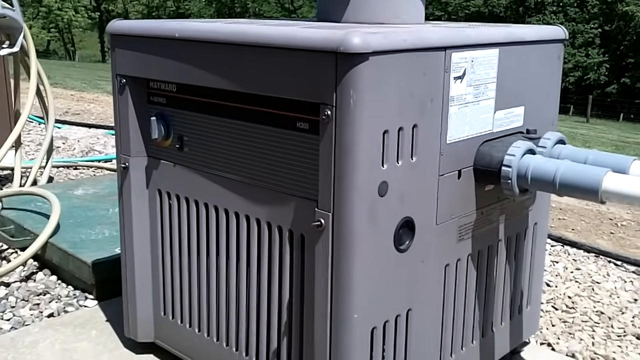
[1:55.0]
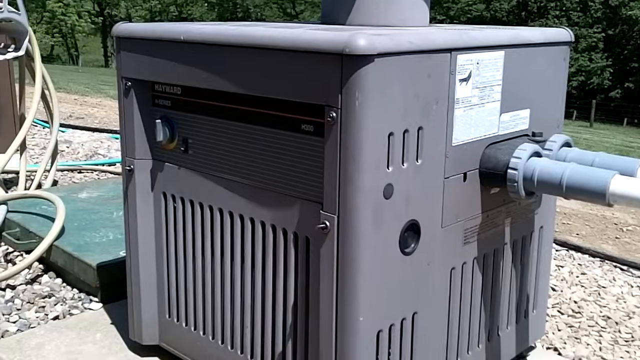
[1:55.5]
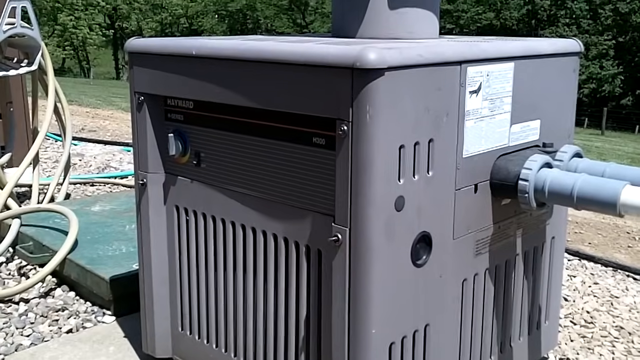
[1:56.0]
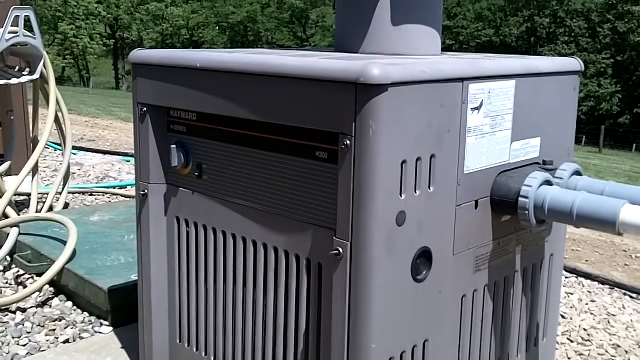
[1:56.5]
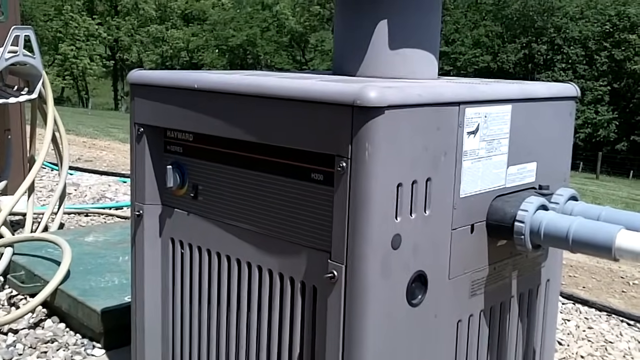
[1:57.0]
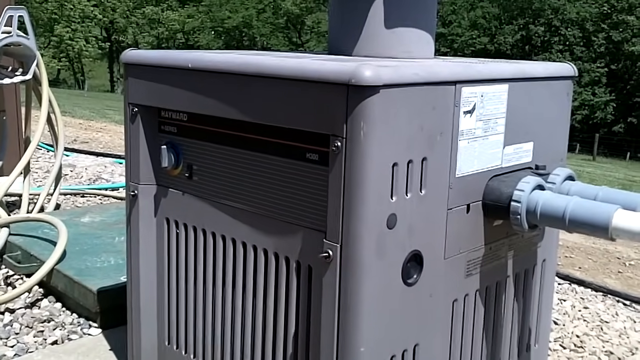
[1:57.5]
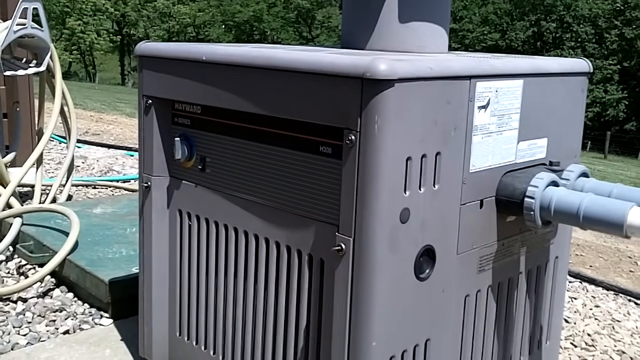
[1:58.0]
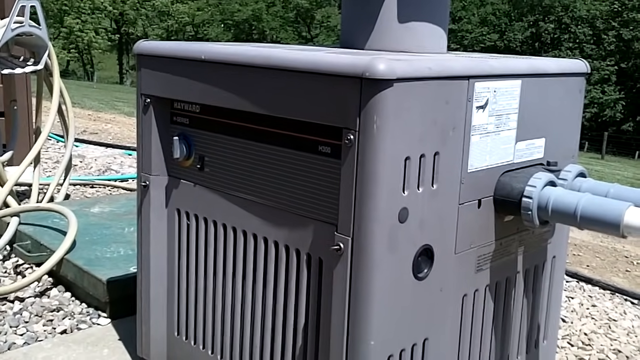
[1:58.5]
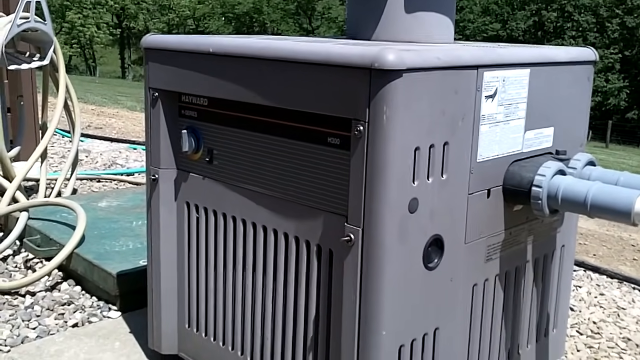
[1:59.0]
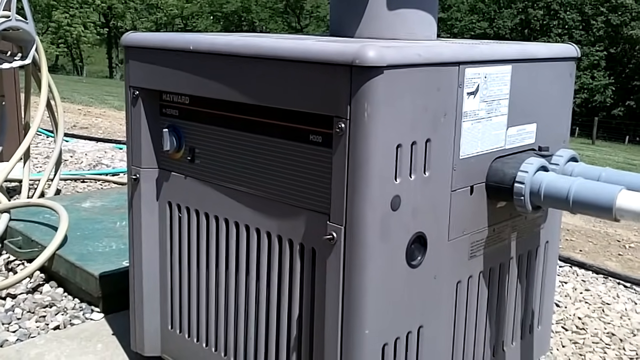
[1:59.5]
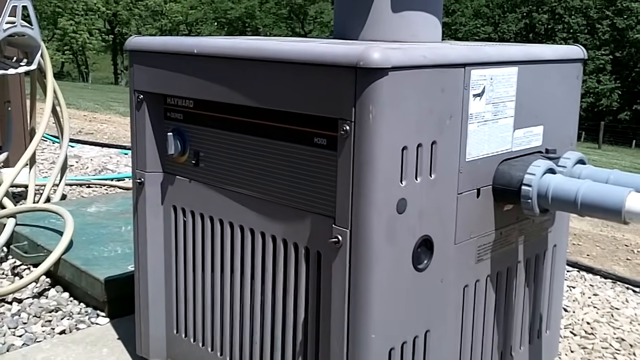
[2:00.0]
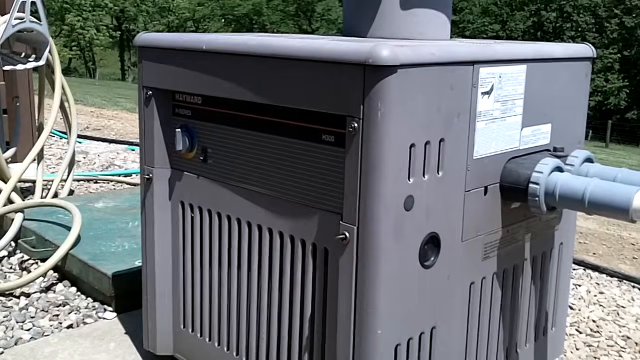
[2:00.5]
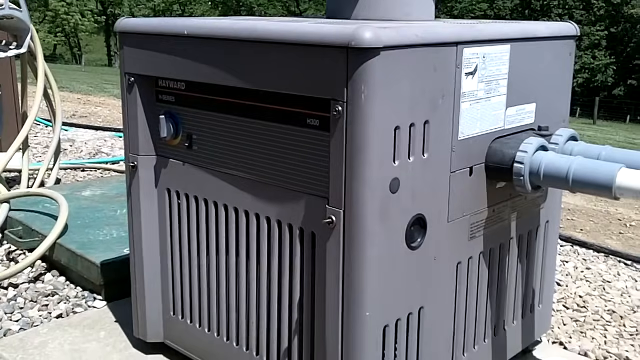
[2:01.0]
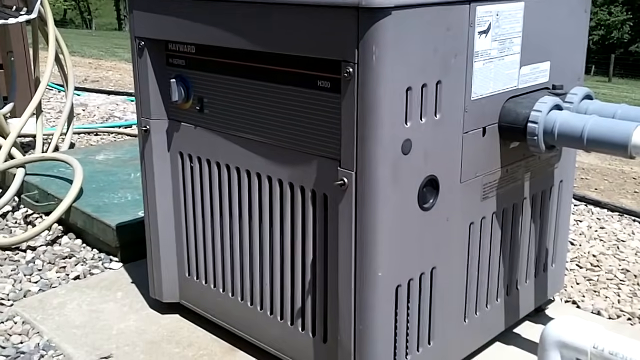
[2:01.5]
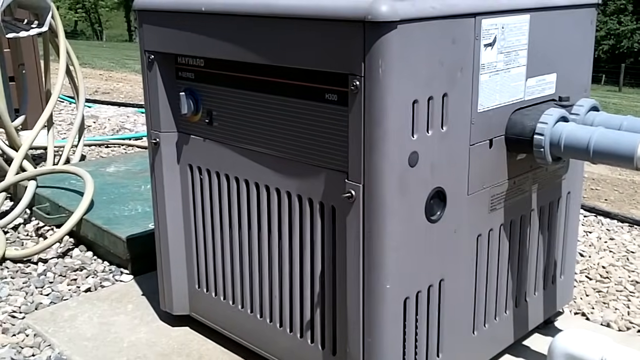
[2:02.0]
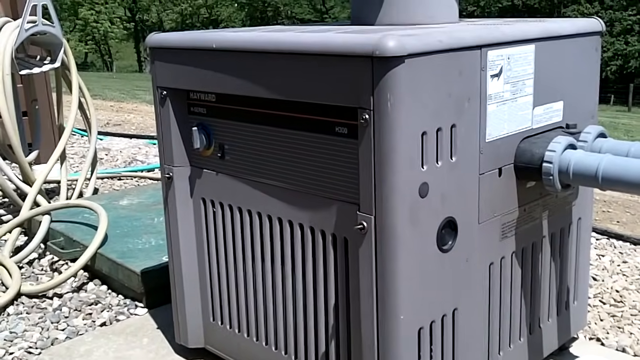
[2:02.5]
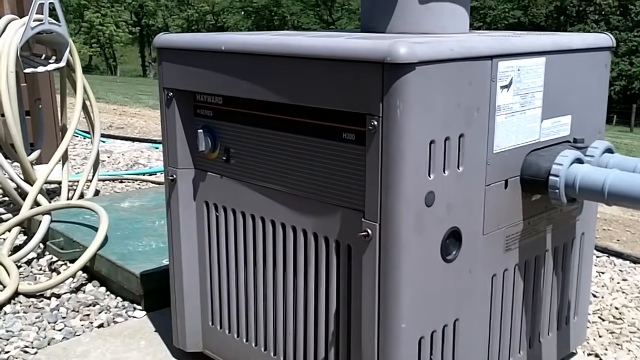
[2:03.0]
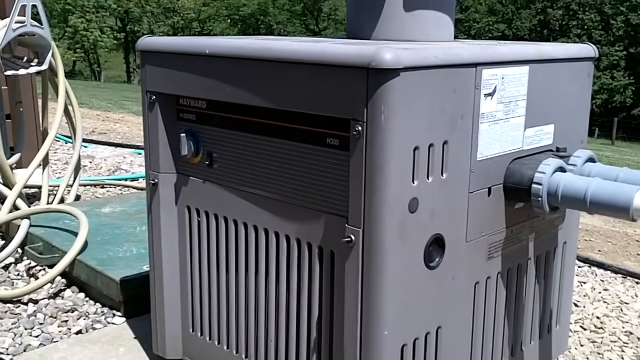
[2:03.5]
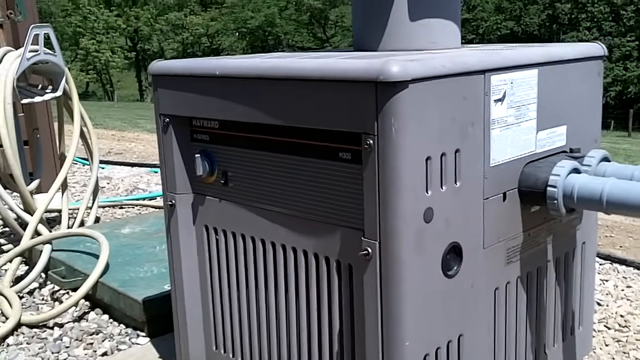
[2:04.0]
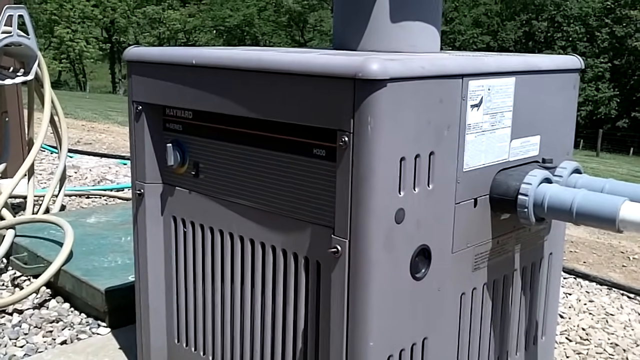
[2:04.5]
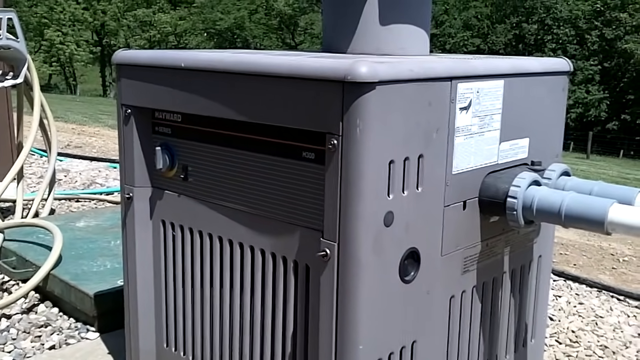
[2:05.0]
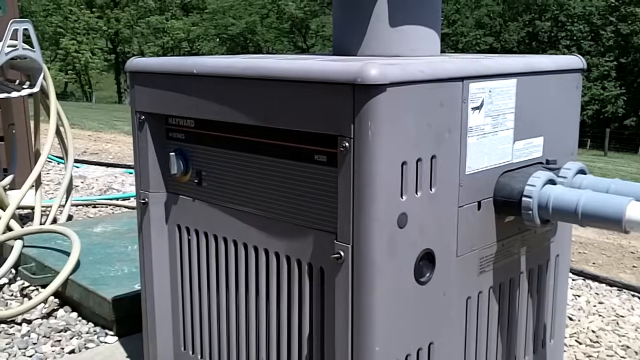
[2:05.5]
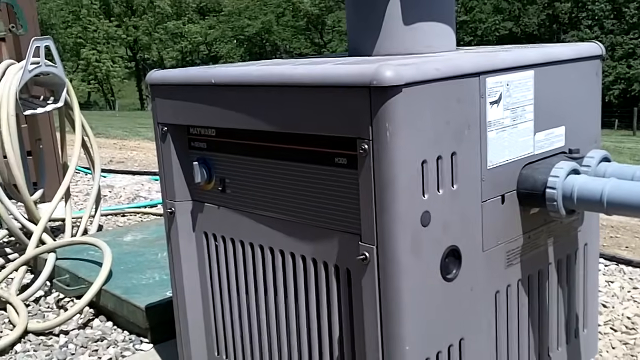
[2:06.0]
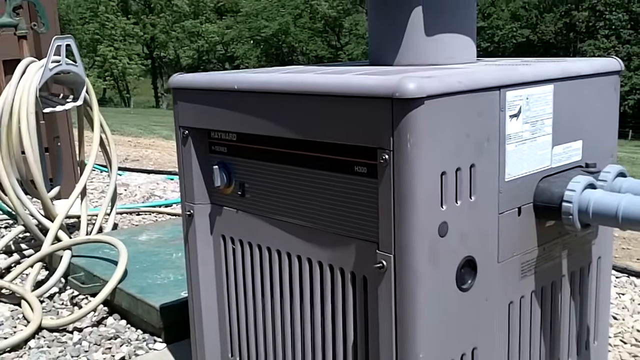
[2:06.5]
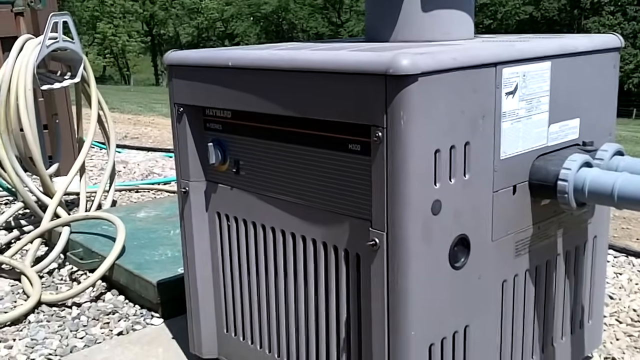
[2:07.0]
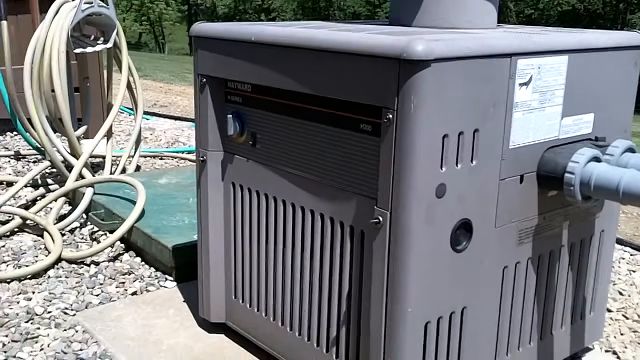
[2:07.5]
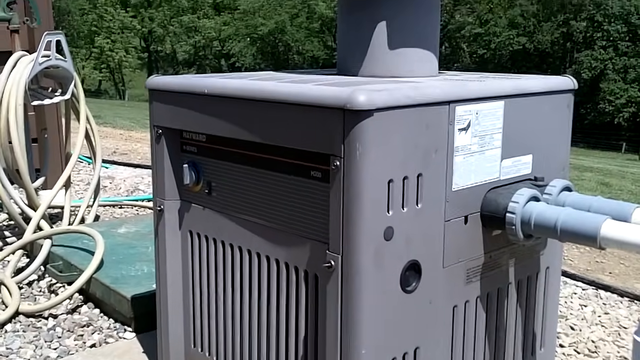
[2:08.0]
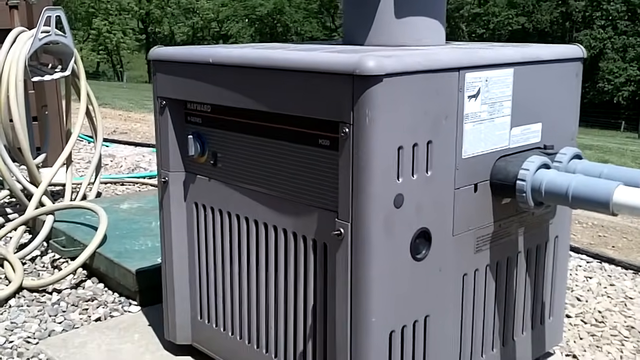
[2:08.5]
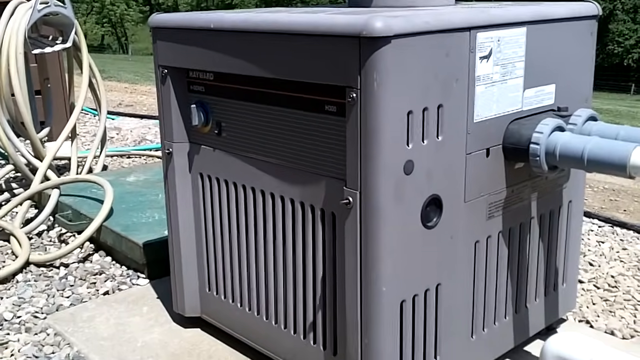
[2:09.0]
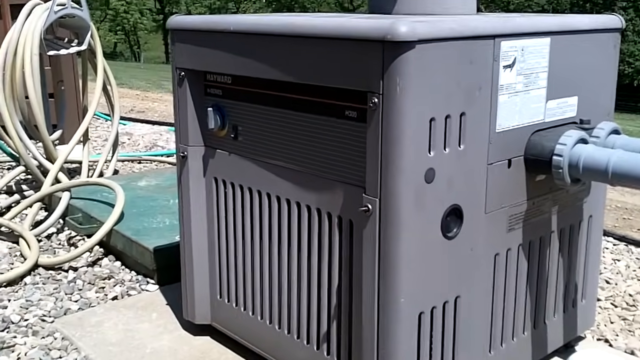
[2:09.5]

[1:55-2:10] A more focused view shows this black box portion, with a big vent on the side and a lot of vents. There looks to be a knob on the left to turn something. The view is almost kind of diagonal, and a circular portion is visible on top. There are stickers with fine print information. On the right are the two white tubes with gray portions and the black tarpaulin holding them in. On the left are more rocks, a green platform, and a beige hose wrapped around a hose carrier. In the background are green trees, grass, gravel and more rocks. The focus seems to be on the gray boxy portion, which almost looks to be the main controls of the overall device.